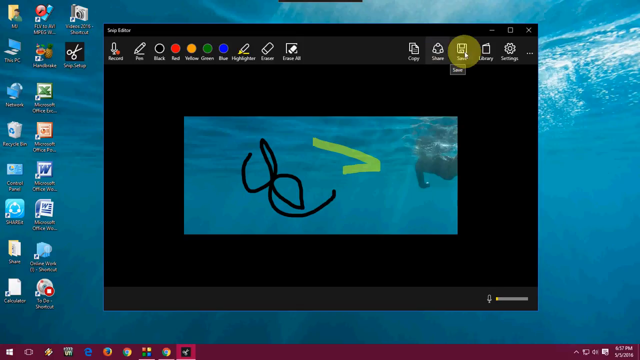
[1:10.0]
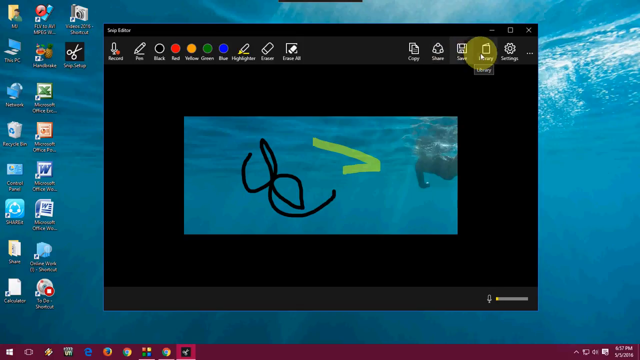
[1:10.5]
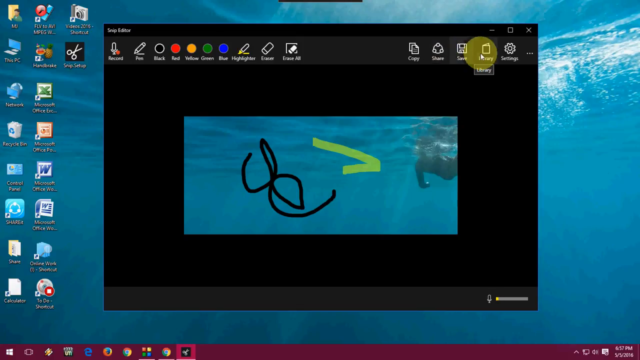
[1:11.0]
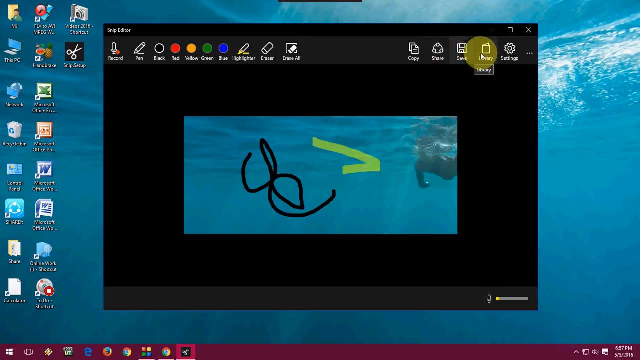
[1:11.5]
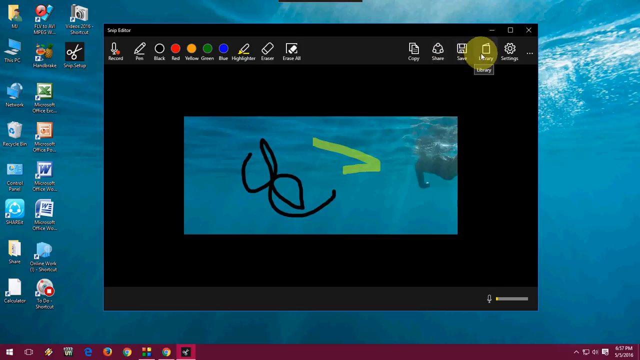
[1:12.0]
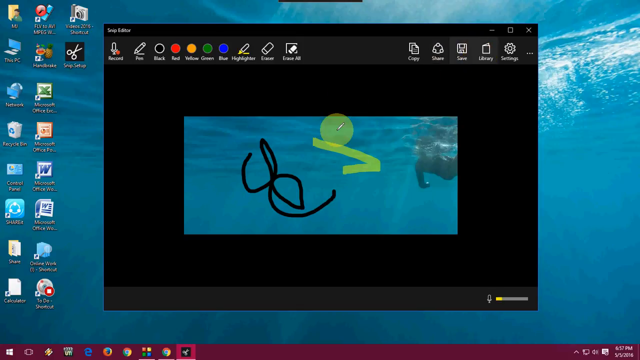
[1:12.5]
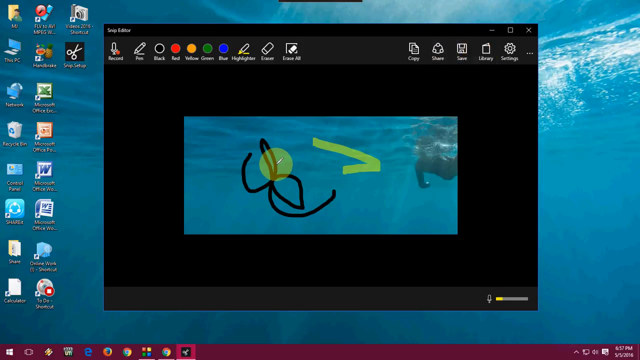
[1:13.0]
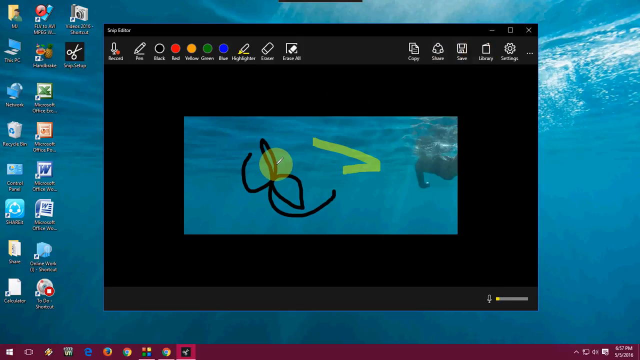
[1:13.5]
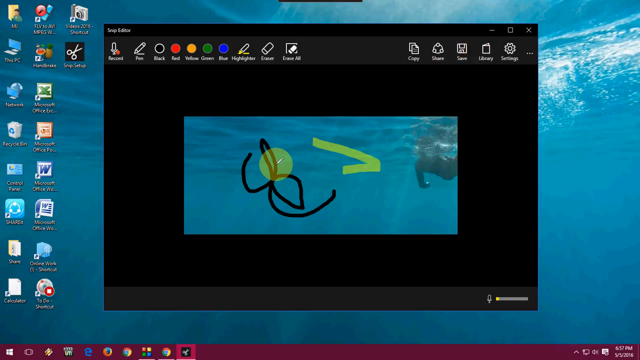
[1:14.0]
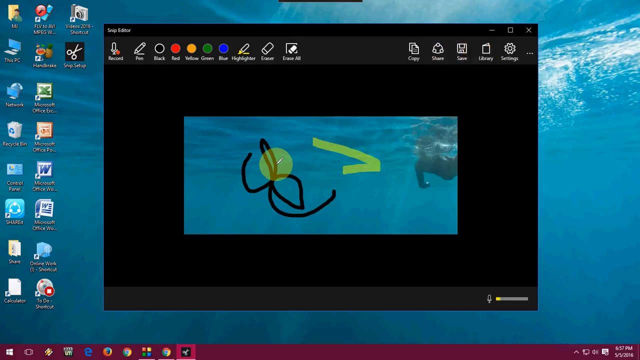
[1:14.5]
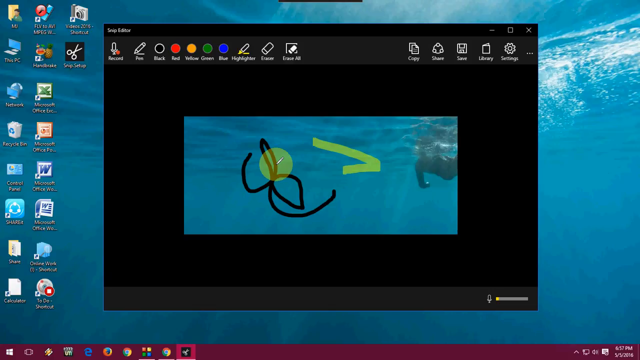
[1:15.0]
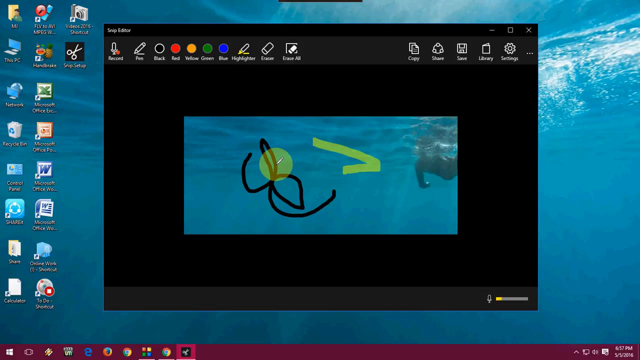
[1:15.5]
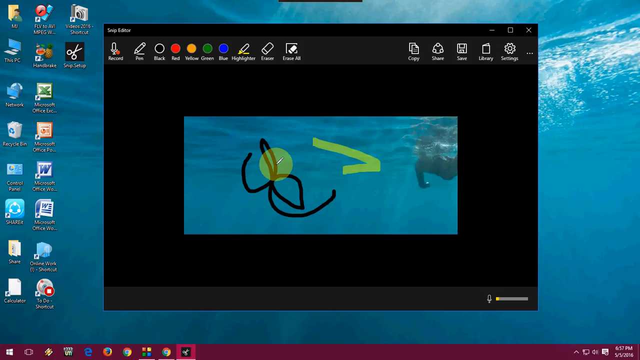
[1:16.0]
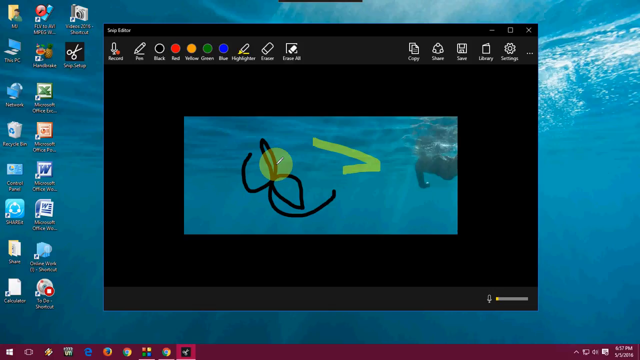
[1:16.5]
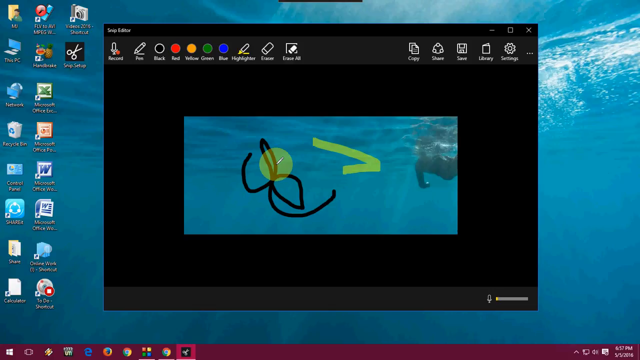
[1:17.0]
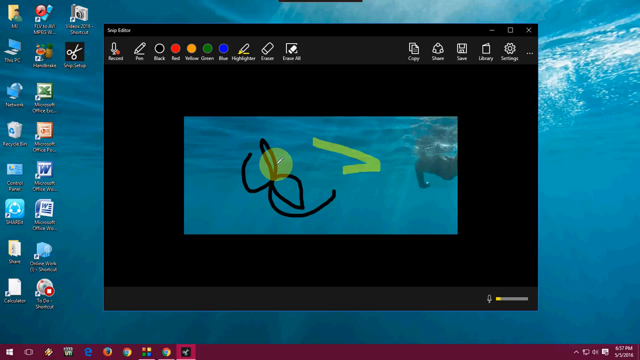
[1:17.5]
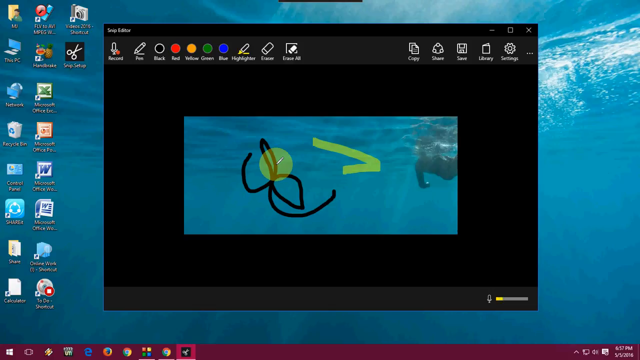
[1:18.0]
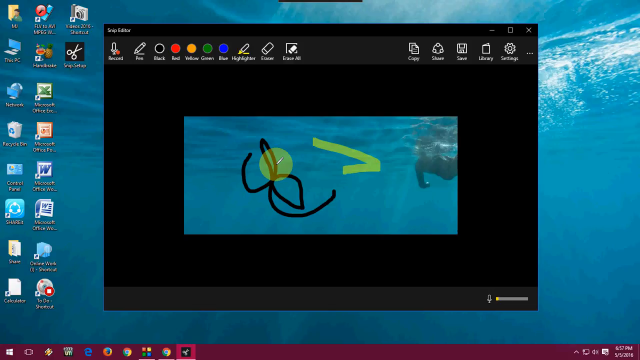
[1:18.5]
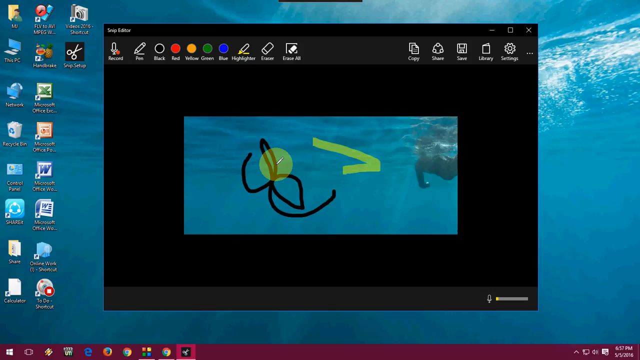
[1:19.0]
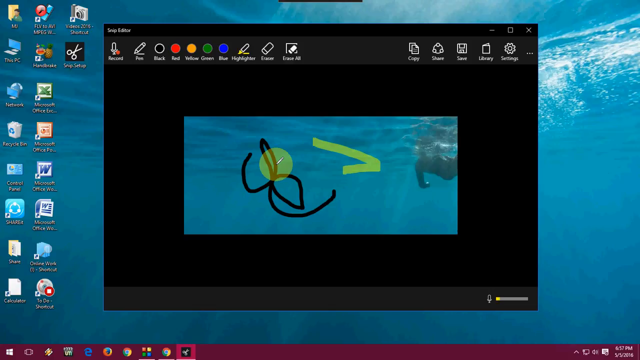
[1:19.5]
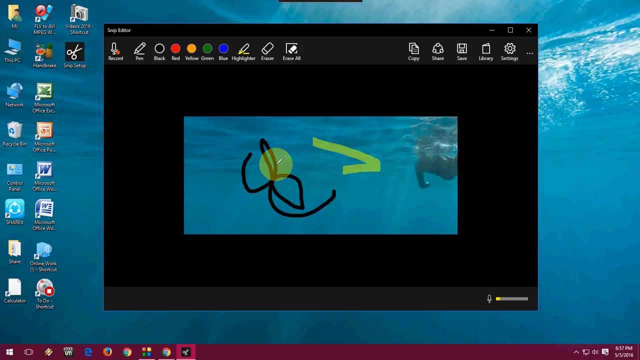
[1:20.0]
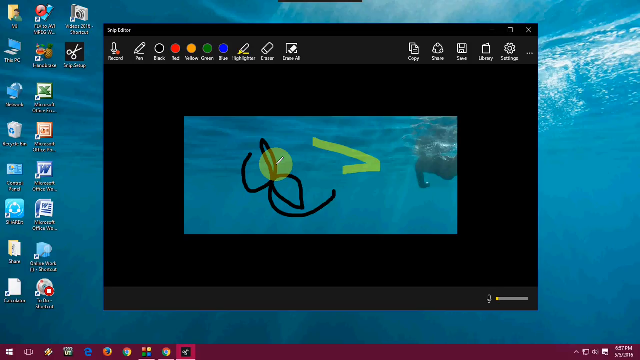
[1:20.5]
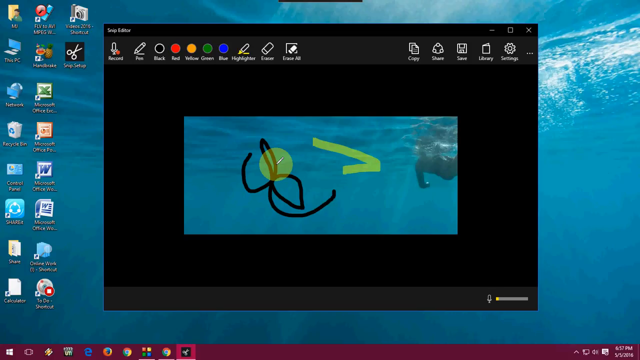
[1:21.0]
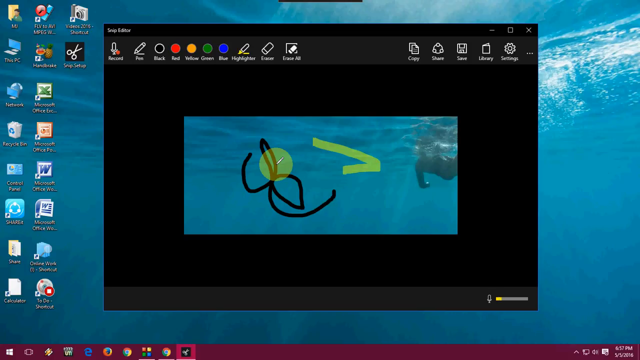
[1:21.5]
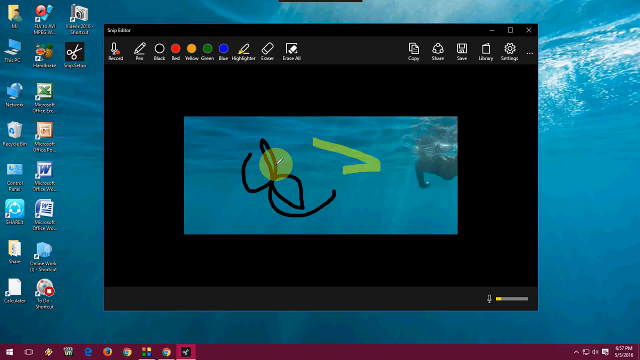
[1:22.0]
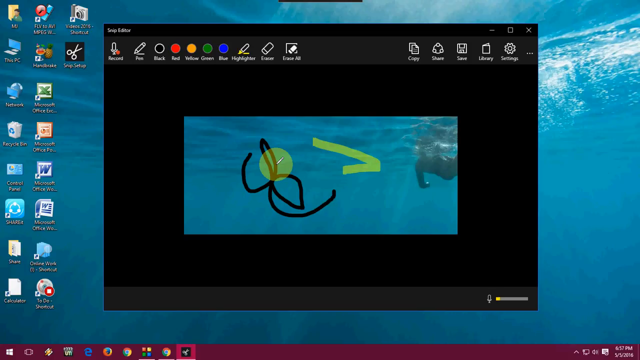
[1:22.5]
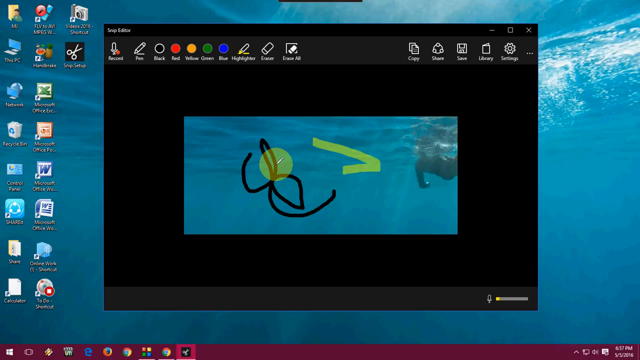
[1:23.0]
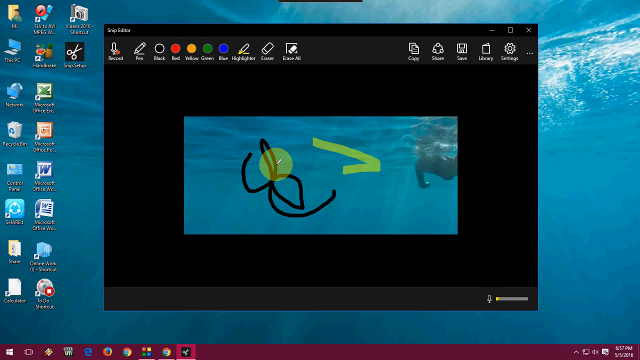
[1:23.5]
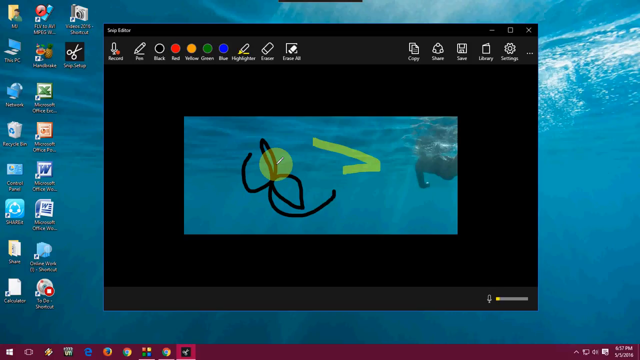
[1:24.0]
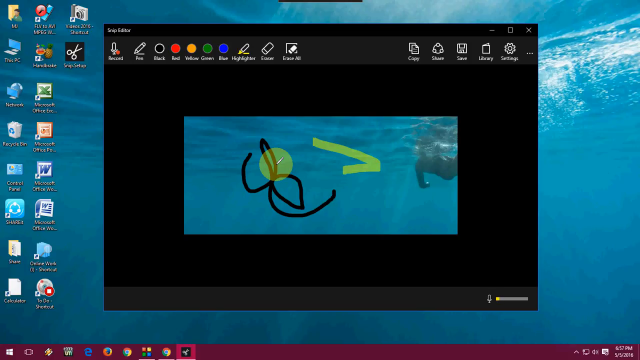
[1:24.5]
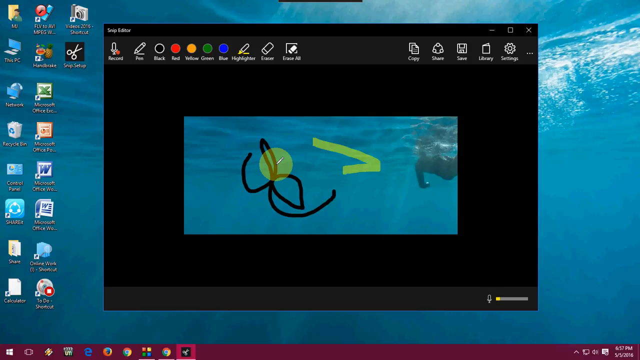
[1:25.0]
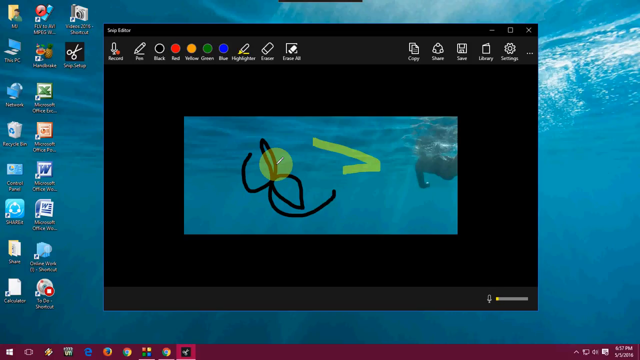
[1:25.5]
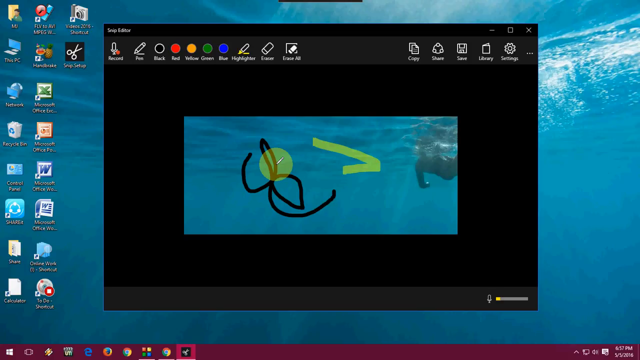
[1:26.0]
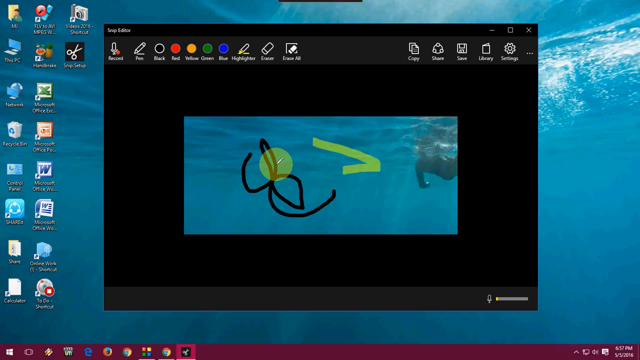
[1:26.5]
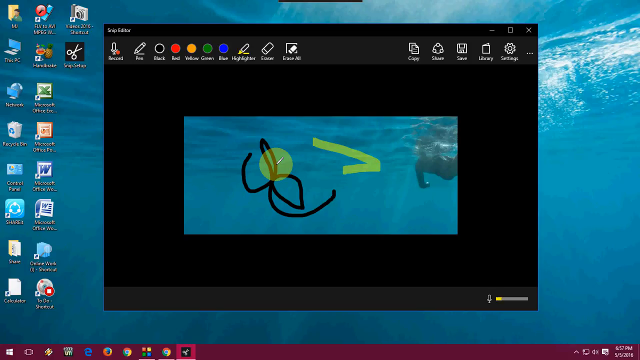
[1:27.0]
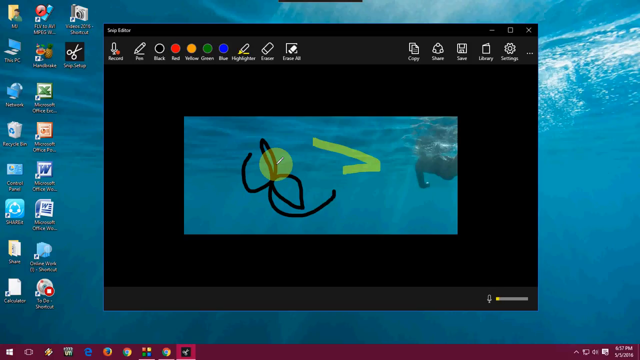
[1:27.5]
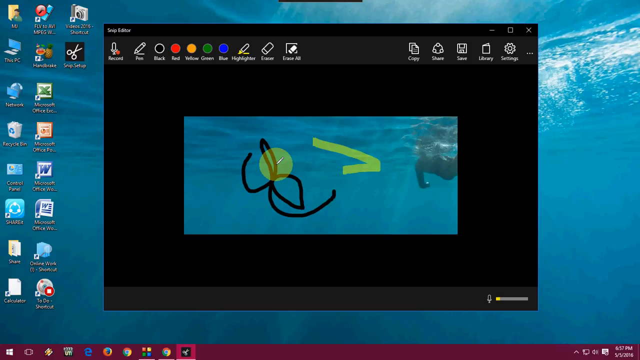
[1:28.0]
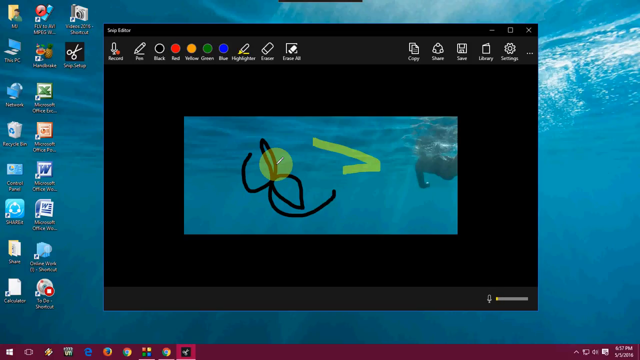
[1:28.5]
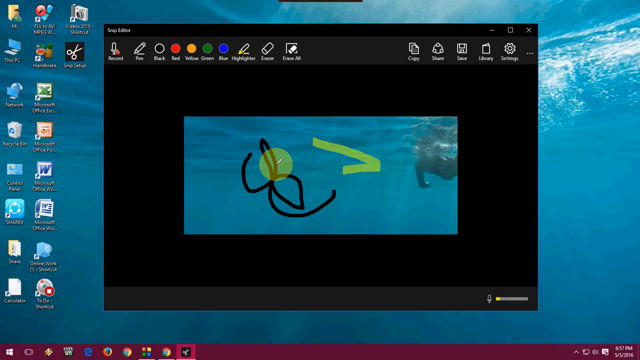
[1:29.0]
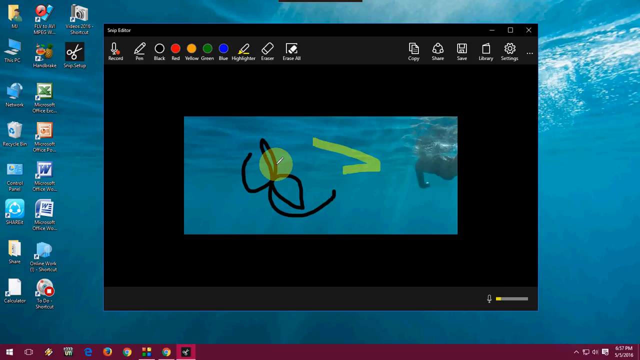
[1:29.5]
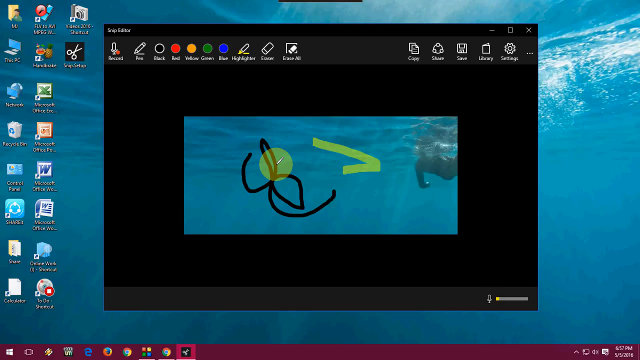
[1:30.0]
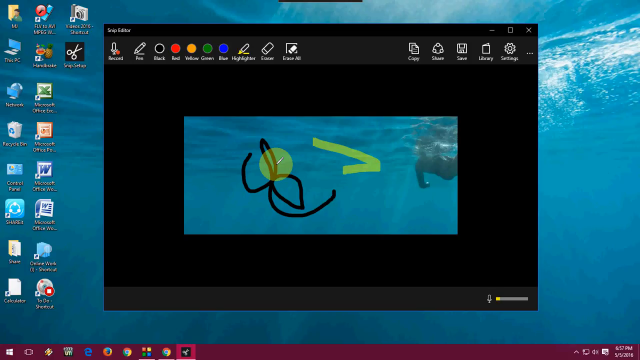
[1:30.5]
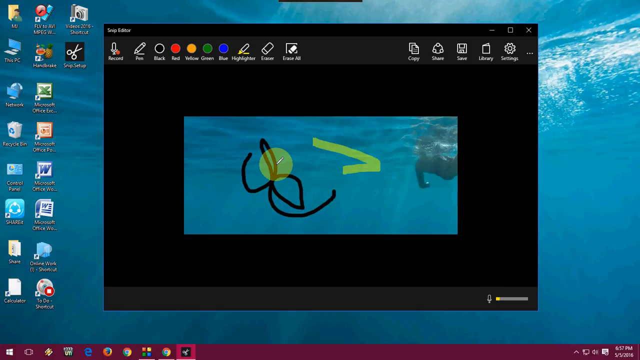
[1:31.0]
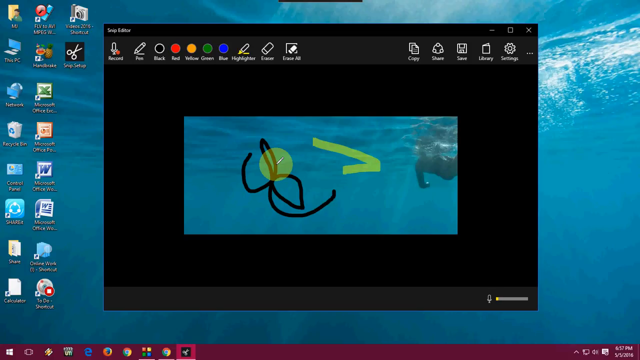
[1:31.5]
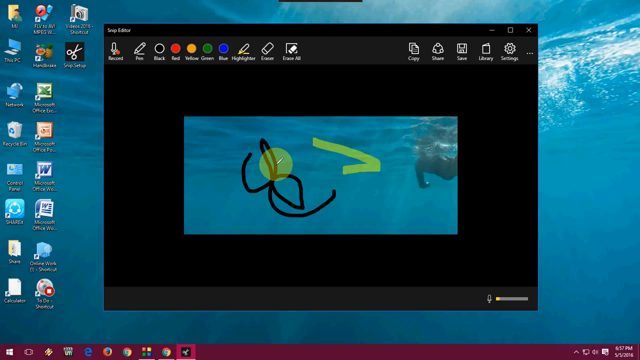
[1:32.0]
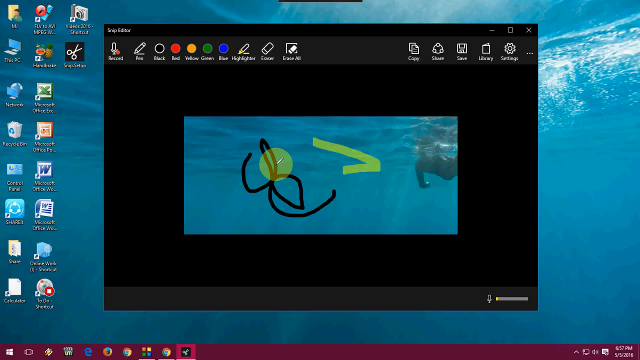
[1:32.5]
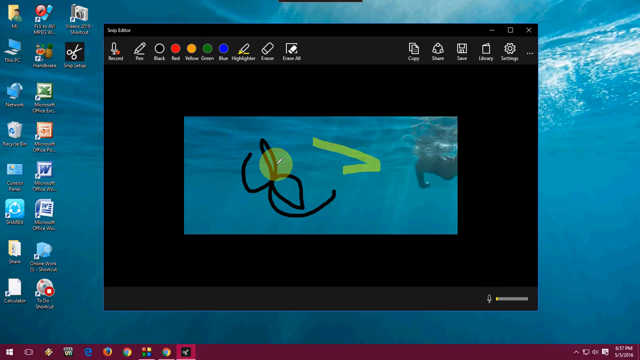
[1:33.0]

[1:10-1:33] A black and yellow grayscale effect has been applied to the image, demonstrating the editing functions on the capture. The mouse is focused on the spot where changes are to be made. There are several editing buttons, including buttons to change colors, change size, add drawings, draw, cut, copy and paste, plus a function button that opens more available options within the app.